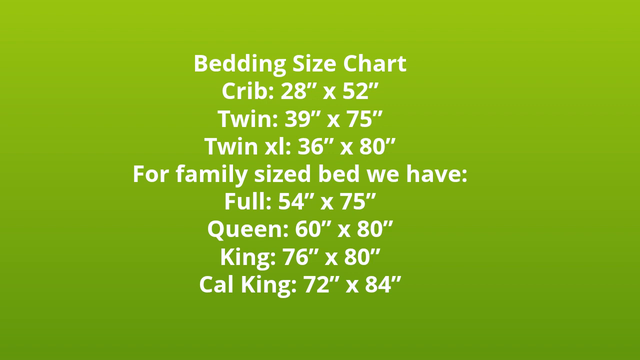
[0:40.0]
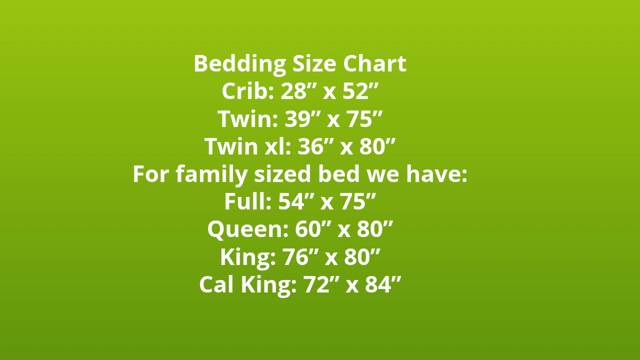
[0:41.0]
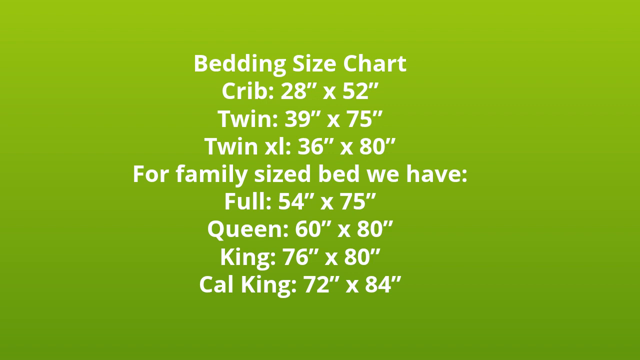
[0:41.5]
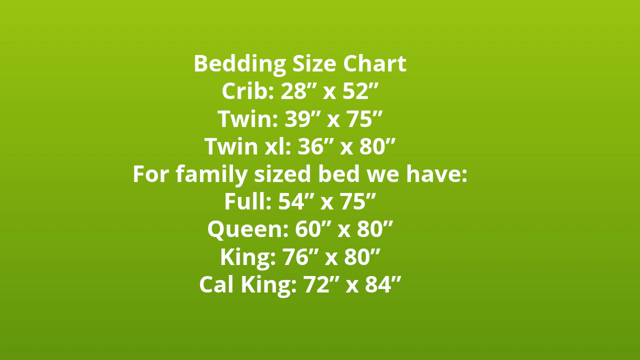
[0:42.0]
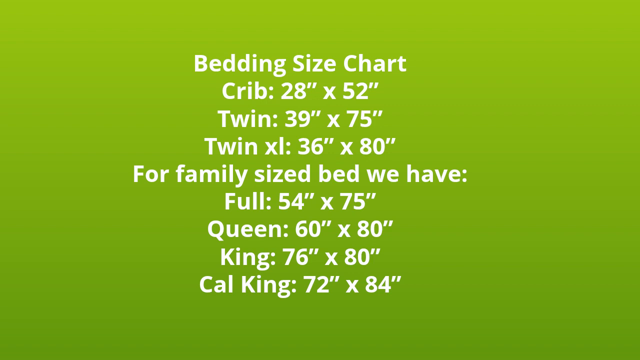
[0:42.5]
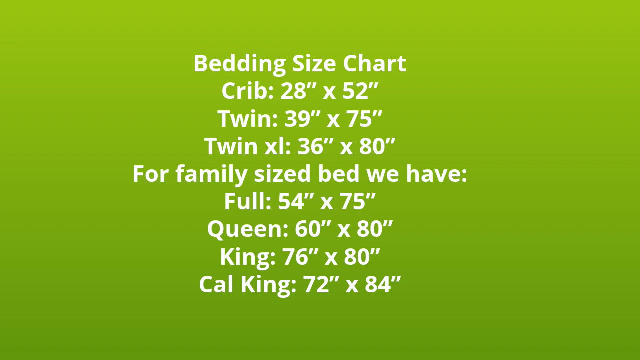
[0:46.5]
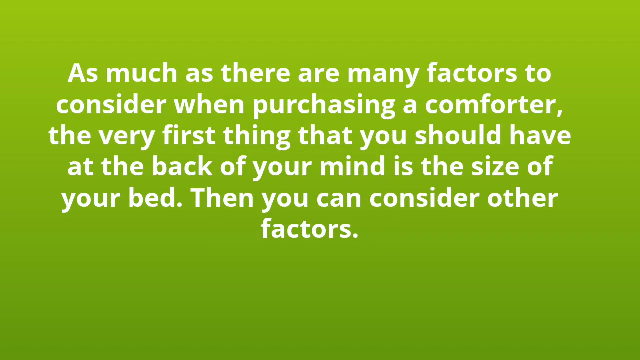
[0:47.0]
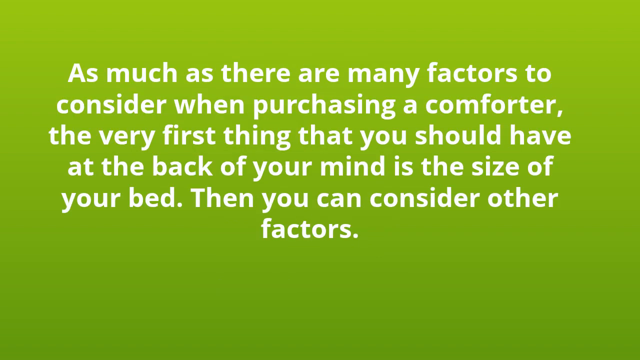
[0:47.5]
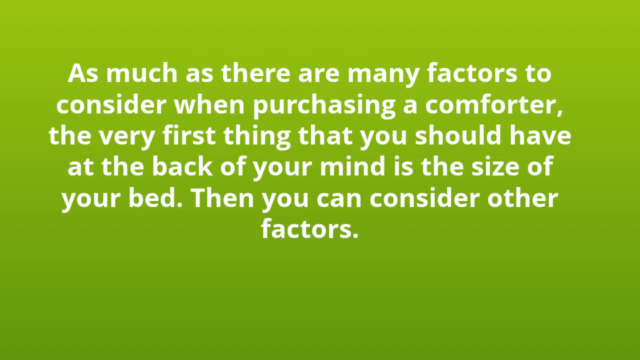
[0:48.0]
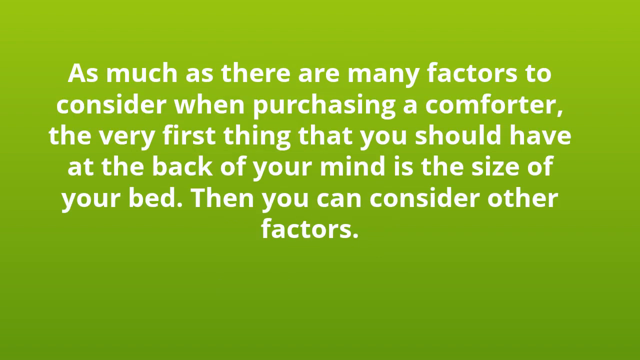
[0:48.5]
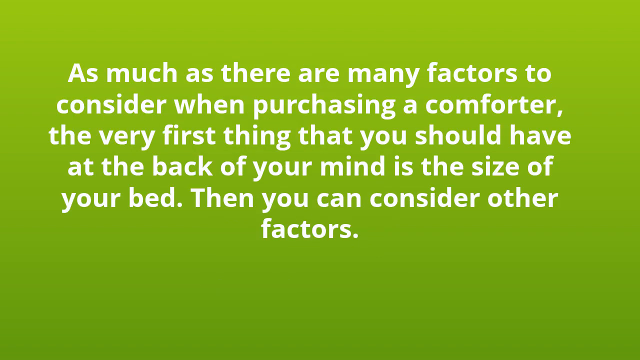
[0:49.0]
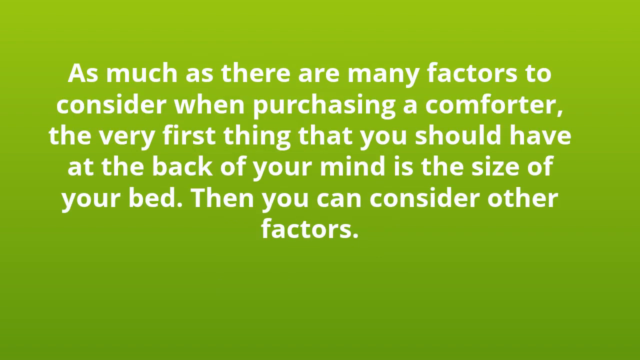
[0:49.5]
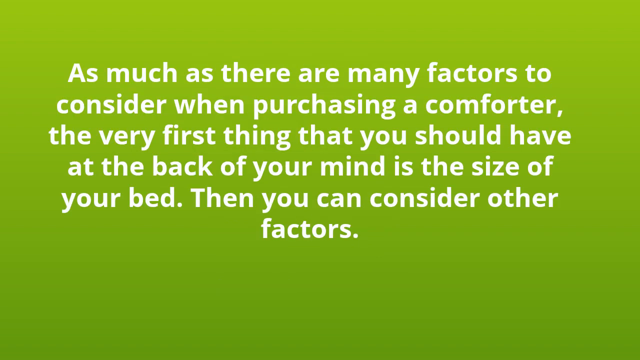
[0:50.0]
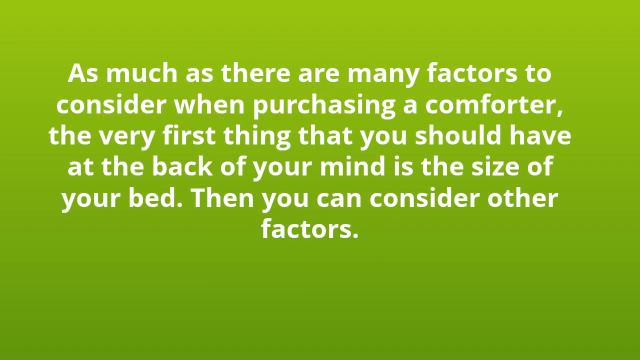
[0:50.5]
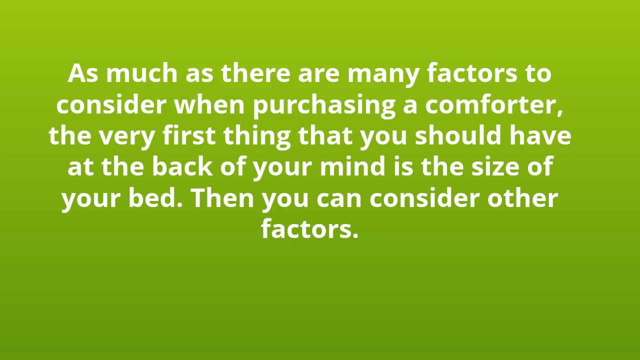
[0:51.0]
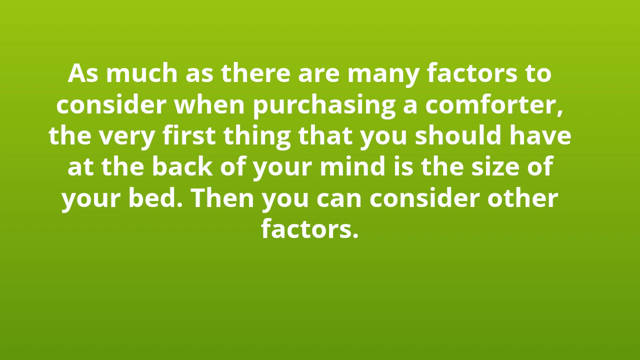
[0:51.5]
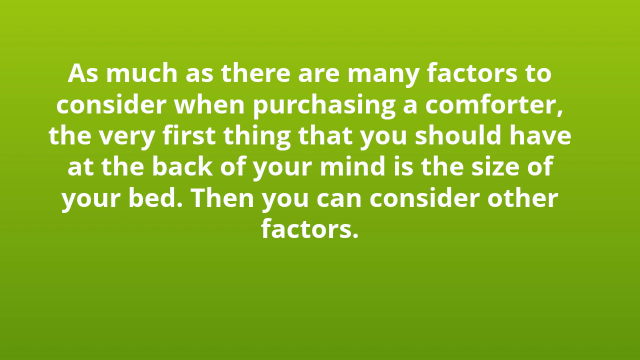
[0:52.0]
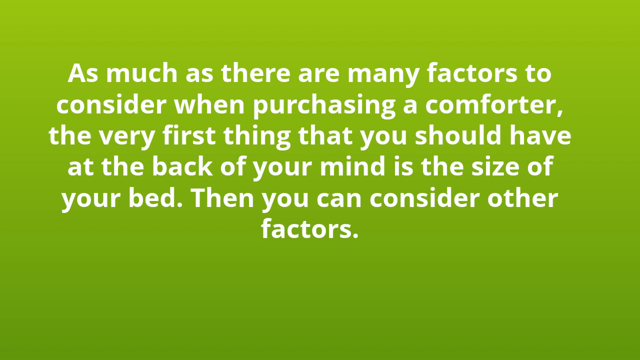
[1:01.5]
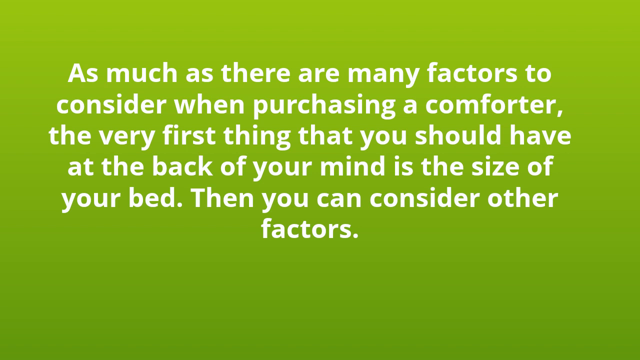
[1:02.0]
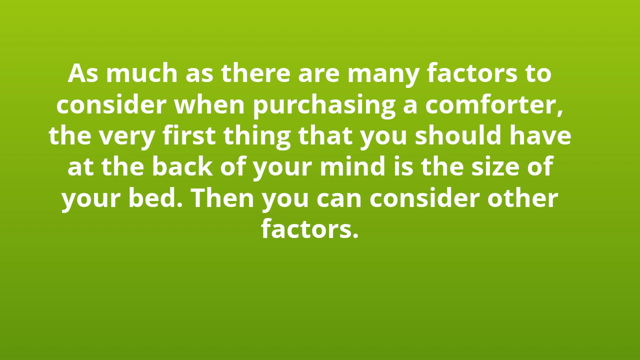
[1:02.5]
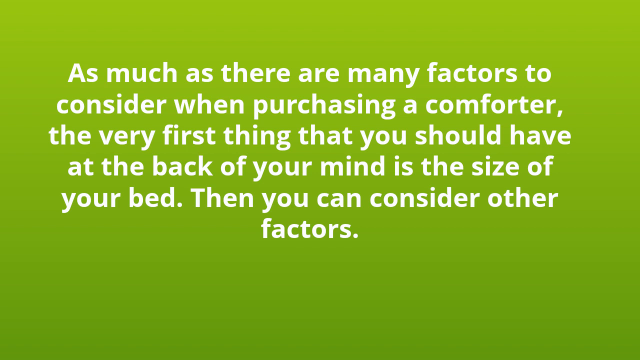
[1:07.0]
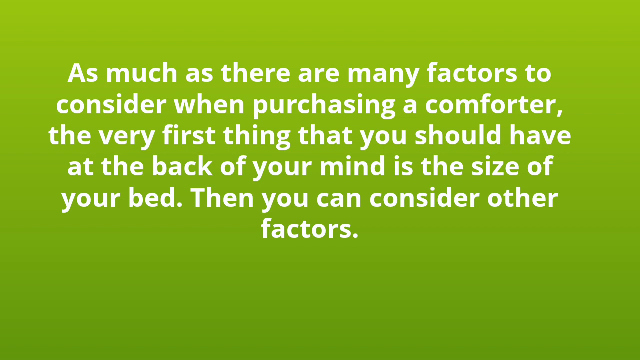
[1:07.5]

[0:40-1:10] The ad shows a slide reading "Bedding size chart" with "crib 28 times 52", "twin 39 times 75", "twin XL 36 times 80", then "For family sized bed, we have" "full 54 times 75", "queen 60 times 80" and "king 76 times 80", plus one more king size at 72 times 84. The slide switches, in a way that is hard to see, to a new slide reading: "As much as there are many factors to consider when purchasing a comforter, the very first thing that you should have at the back of your mind is the size of your bed. Then you can consider other factors." The background is green and the words are kind of white or off-white, centered like a title page; nothing else happens.